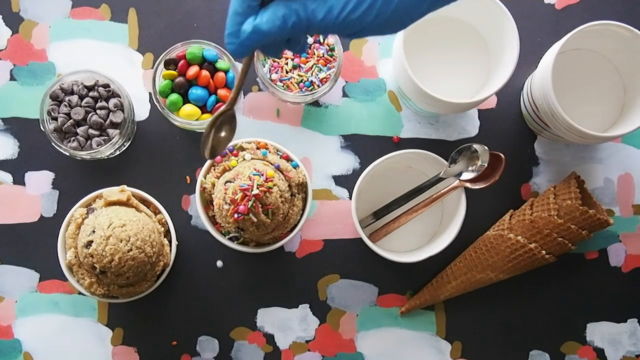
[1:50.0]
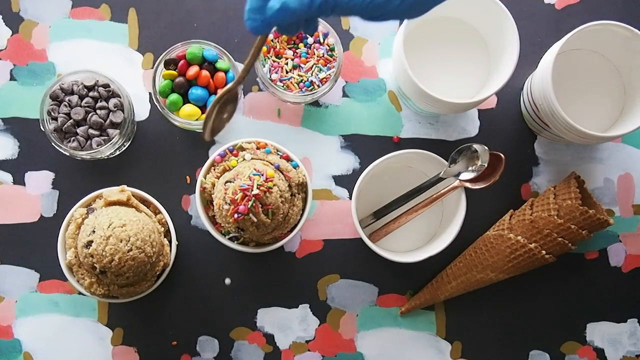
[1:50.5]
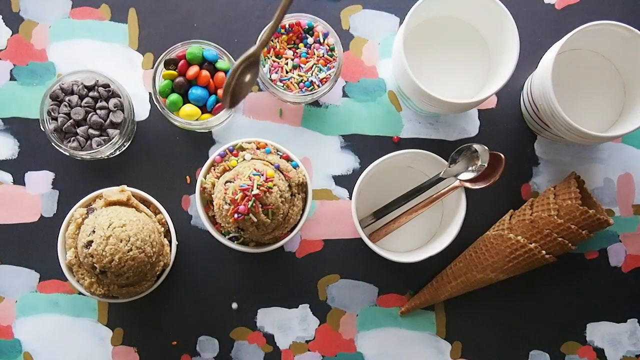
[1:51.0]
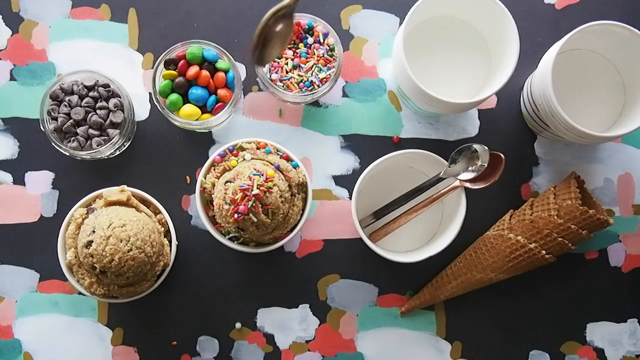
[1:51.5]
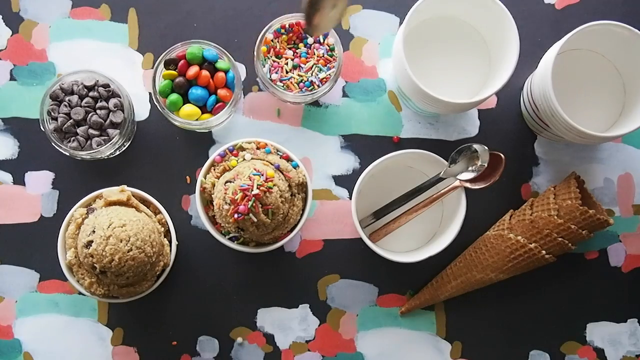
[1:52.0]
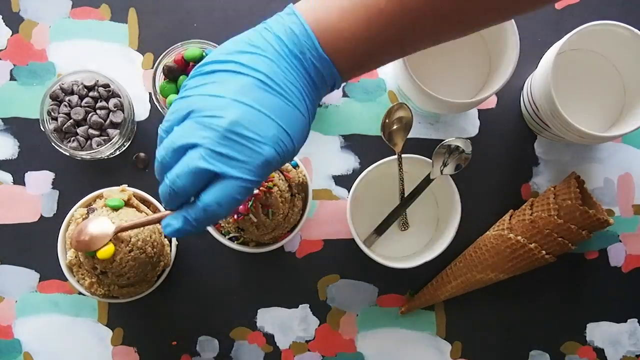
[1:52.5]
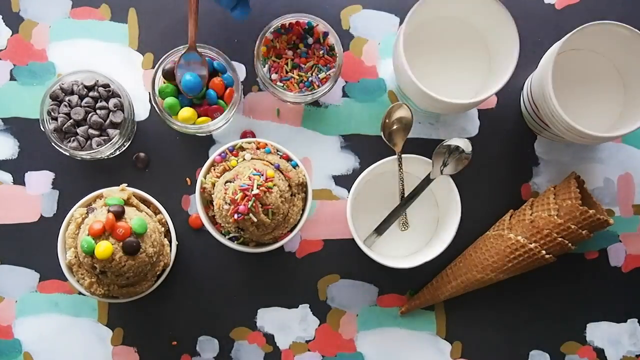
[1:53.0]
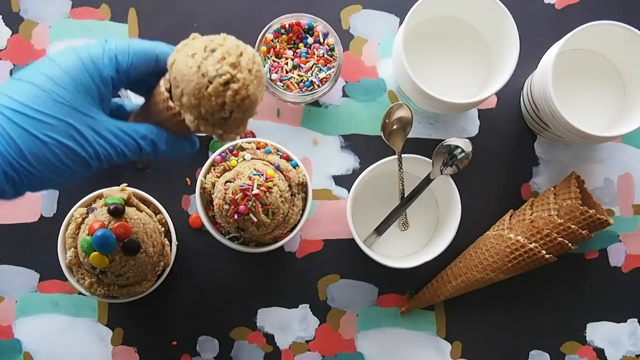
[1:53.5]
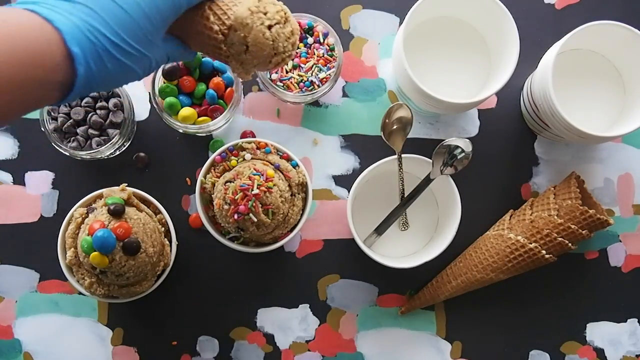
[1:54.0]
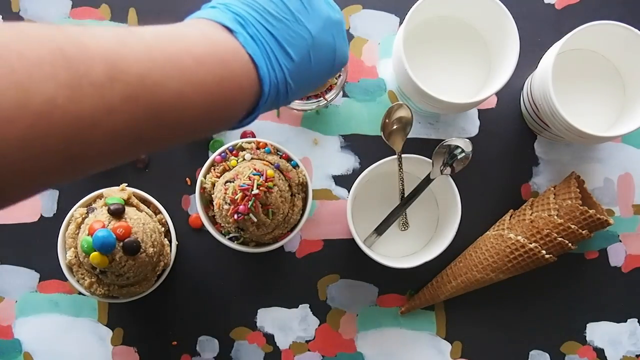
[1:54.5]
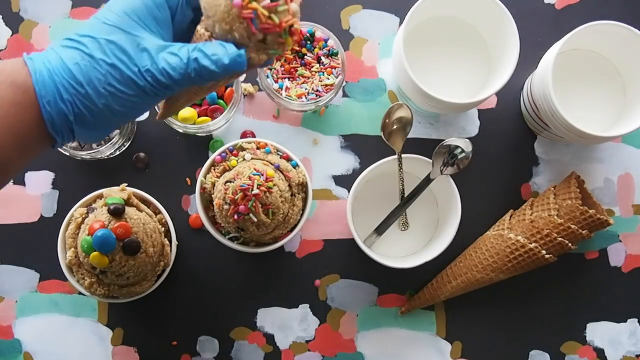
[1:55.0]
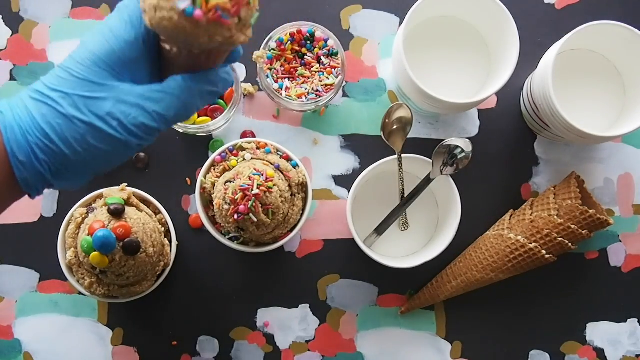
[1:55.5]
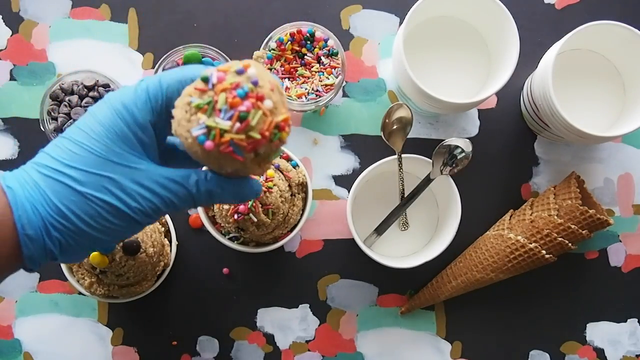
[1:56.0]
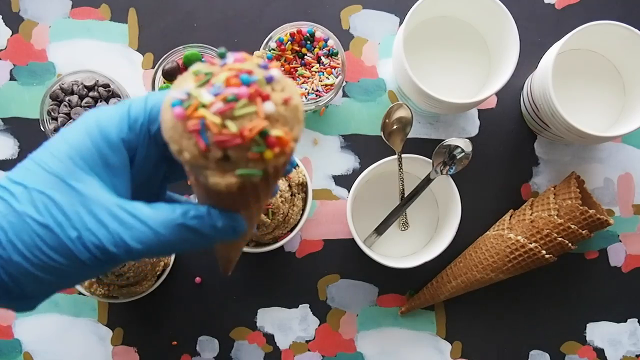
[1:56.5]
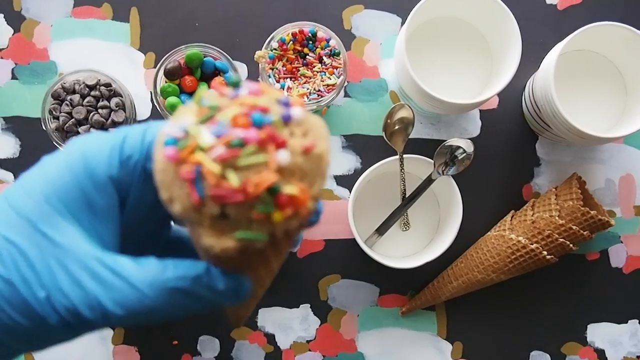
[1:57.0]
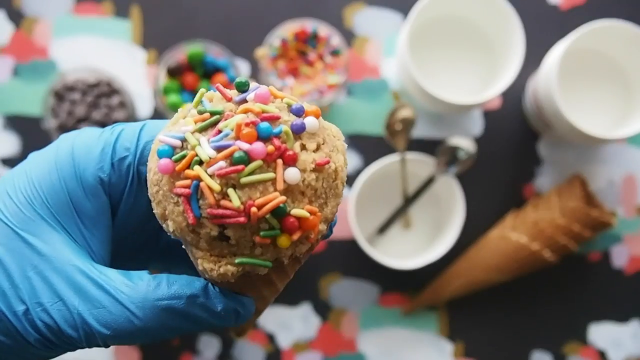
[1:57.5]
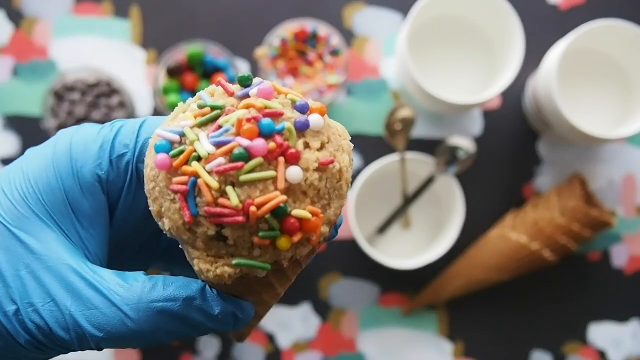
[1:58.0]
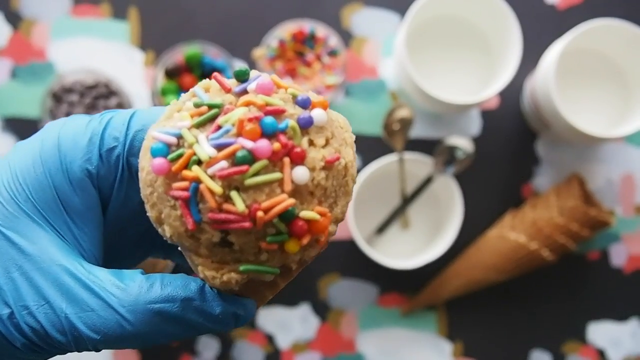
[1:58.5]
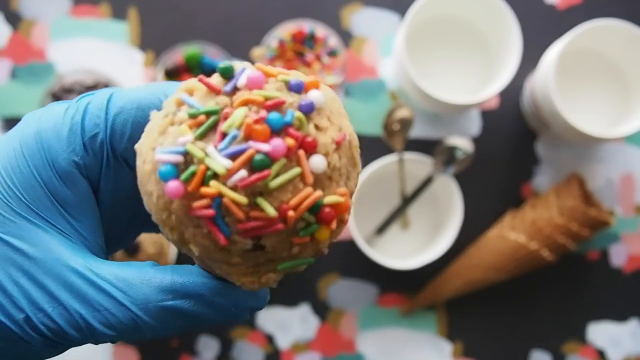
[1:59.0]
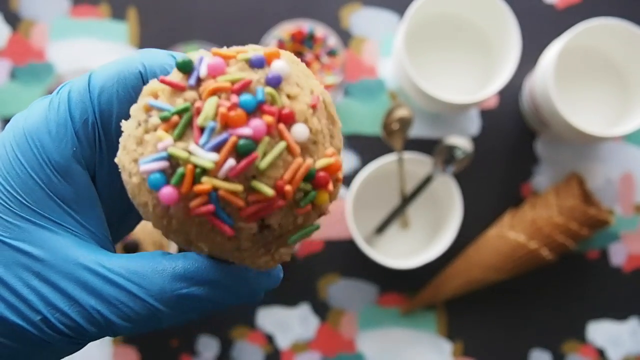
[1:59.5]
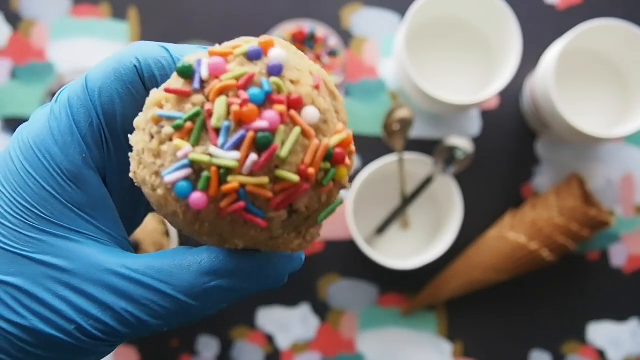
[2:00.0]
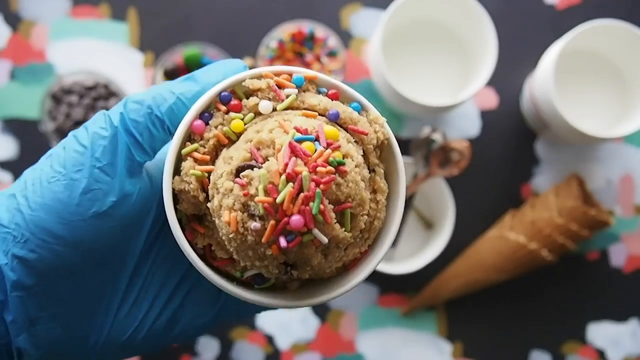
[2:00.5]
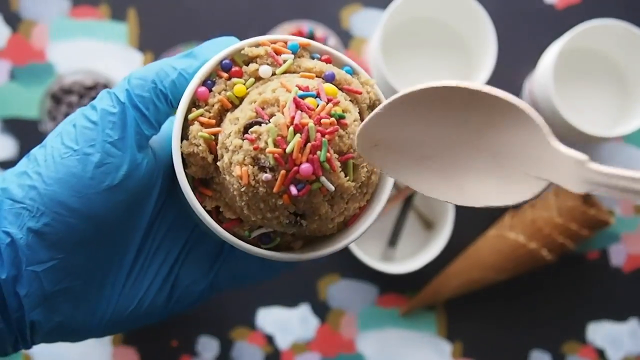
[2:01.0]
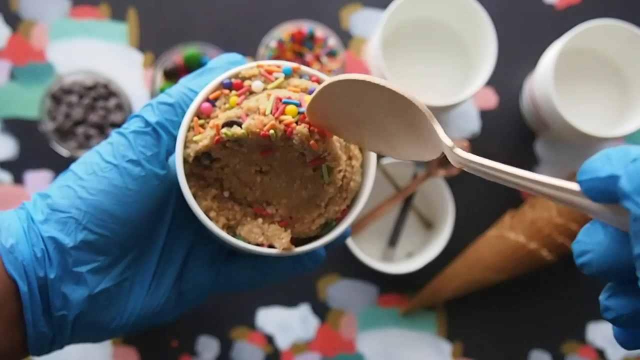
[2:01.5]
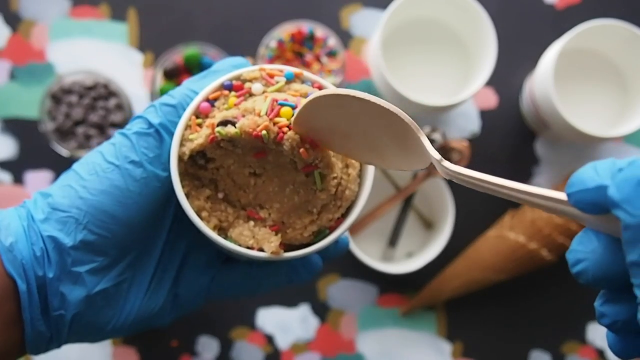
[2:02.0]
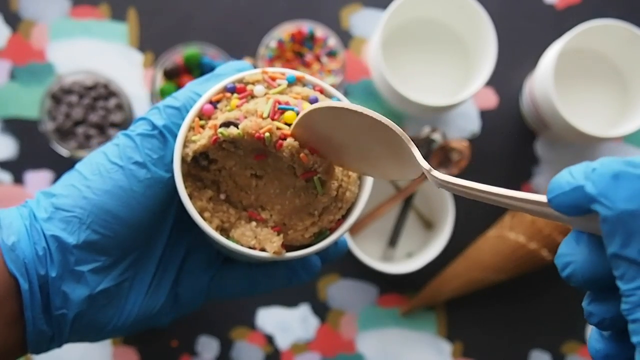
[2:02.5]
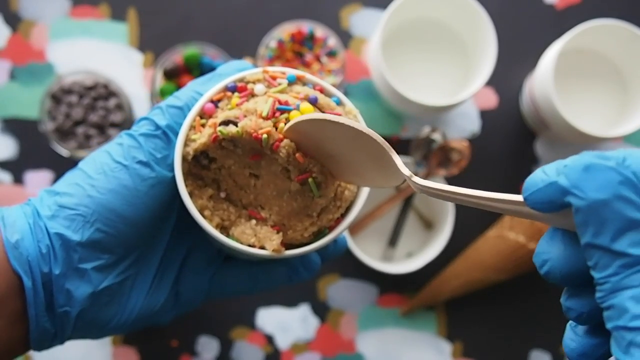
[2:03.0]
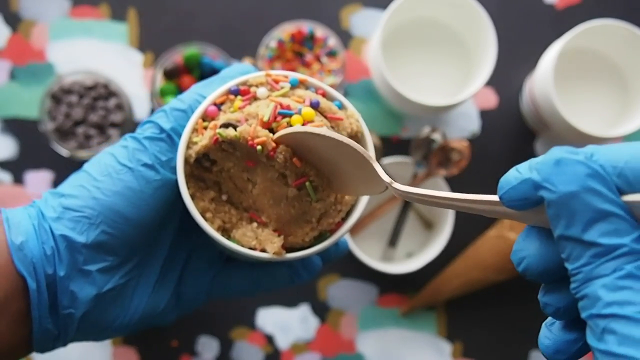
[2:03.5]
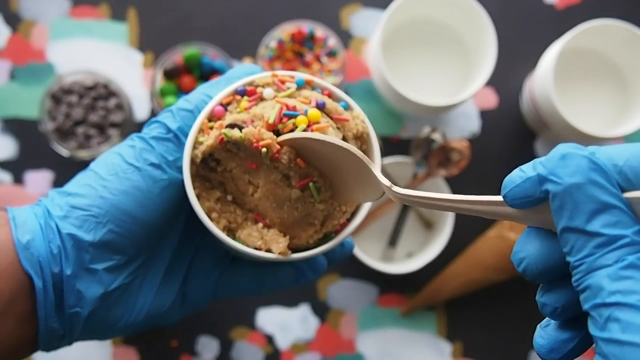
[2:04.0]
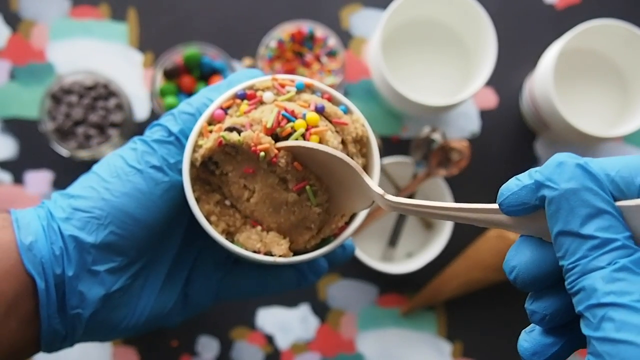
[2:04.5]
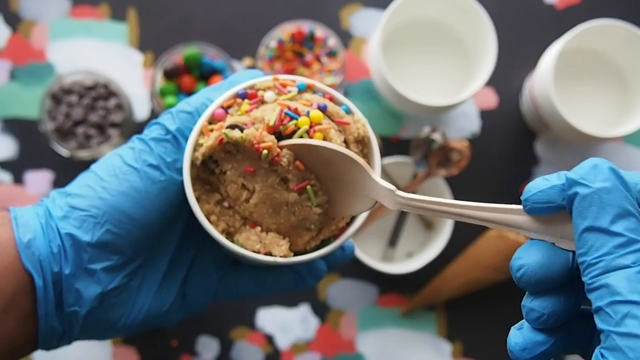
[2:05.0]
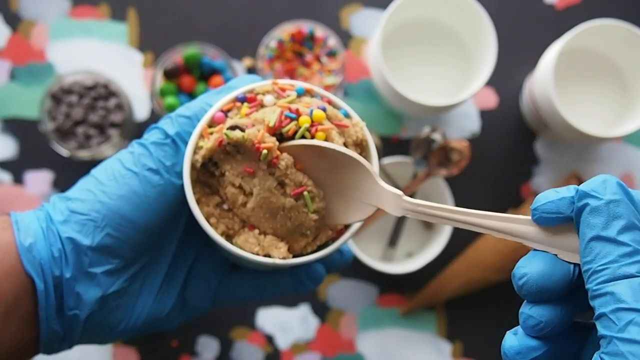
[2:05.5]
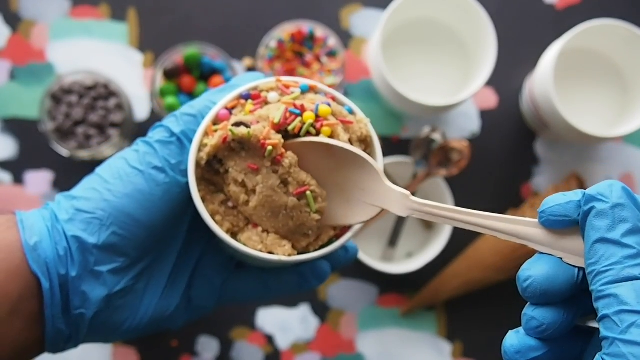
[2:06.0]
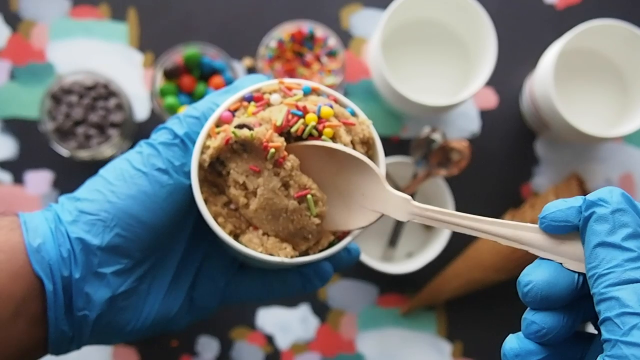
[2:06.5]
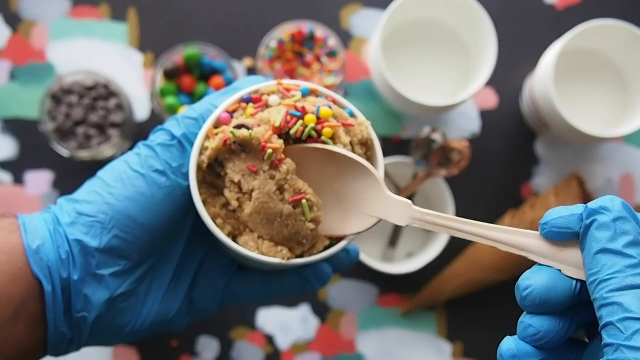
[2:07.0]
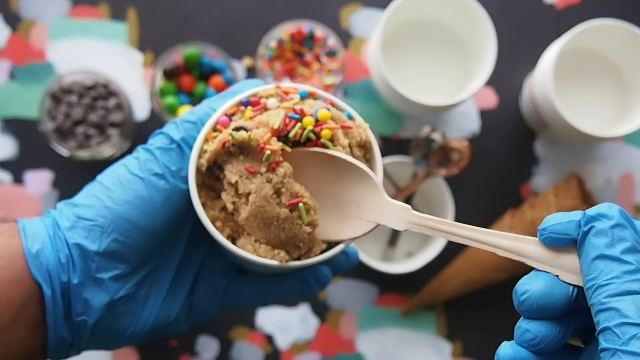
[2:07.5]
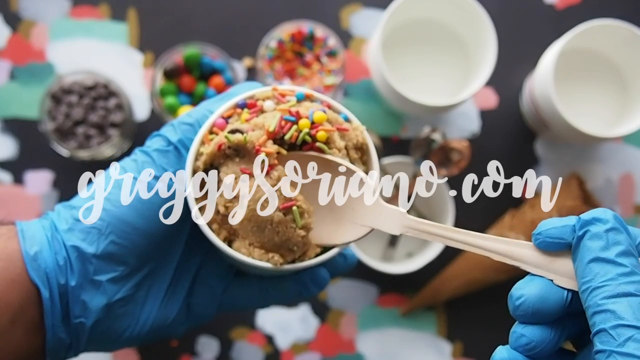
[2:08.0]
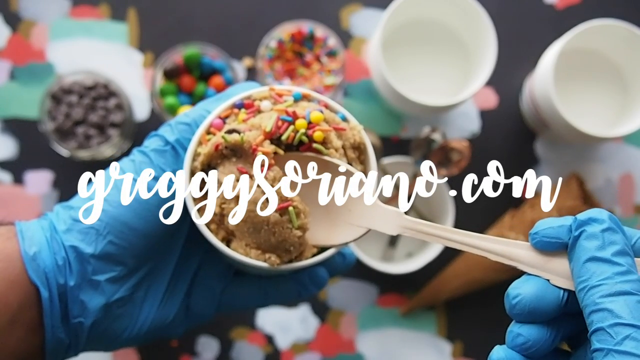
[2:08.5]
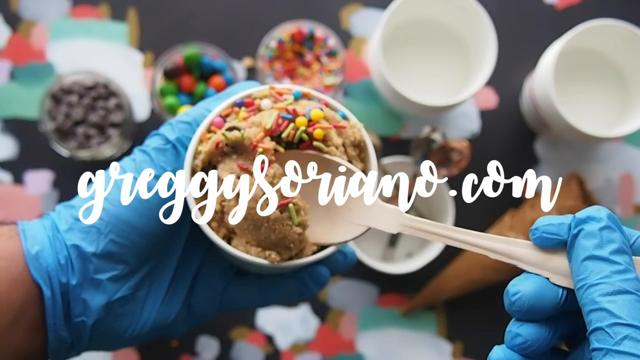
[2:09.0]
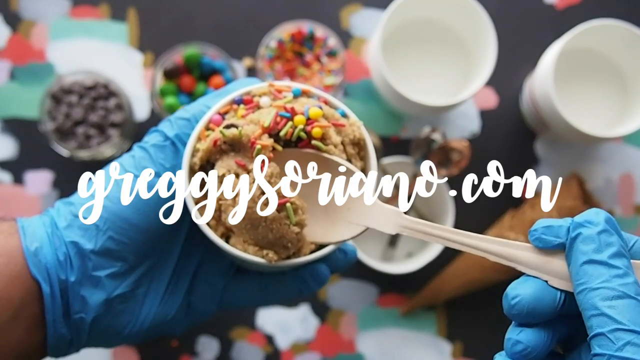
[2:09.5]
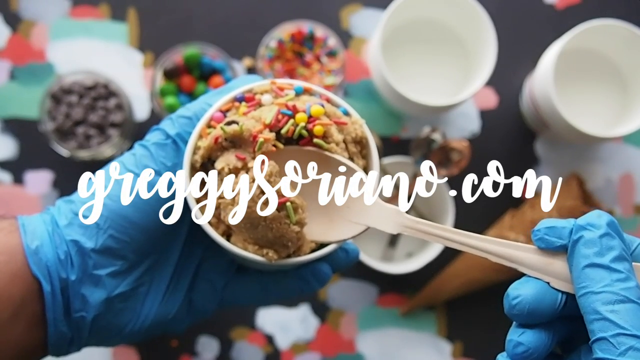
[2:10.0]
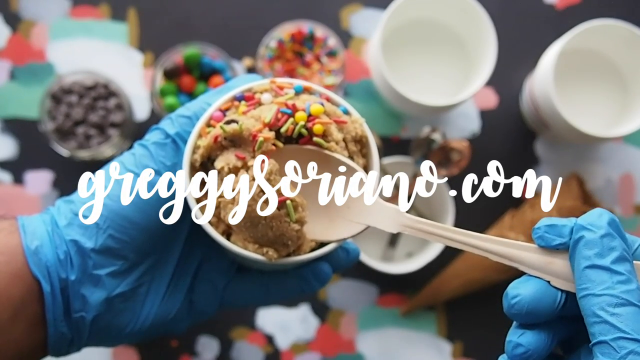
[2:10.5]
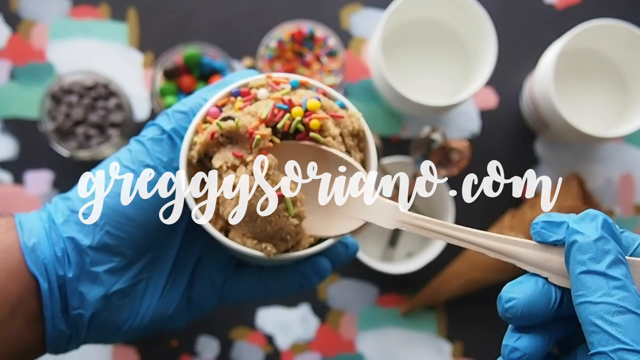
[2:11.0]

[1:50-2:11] A person wearing blue gloves sprinkles sprinkles onto the cooking dough, with candies, plastic cups, other spoons, white cups, treats and sprinkles around. Everything is on a table with a cloth that looks like a bakery, with bakery graffiti. More sprinkles are added to the dough along with treats. The corn with the cooking dough is dipped into the treats, which attach themselves to the dough. Then the man scoops the dough with a spoon and begins to eat.